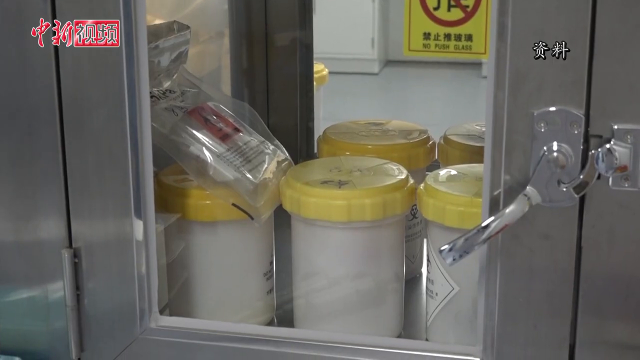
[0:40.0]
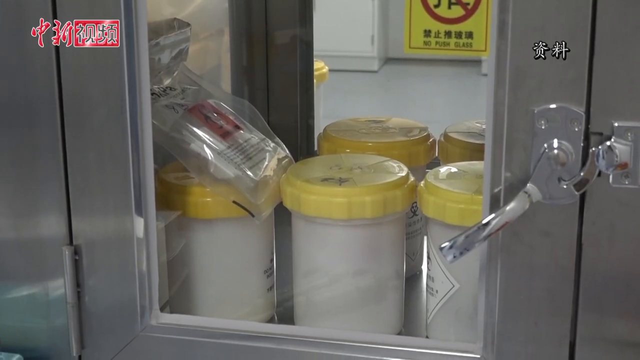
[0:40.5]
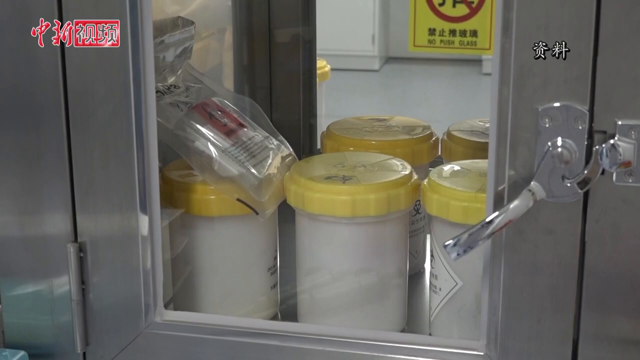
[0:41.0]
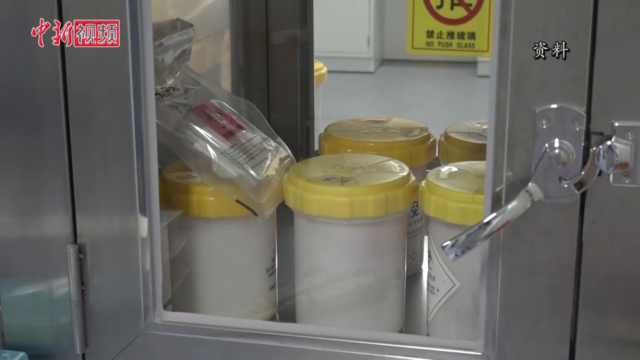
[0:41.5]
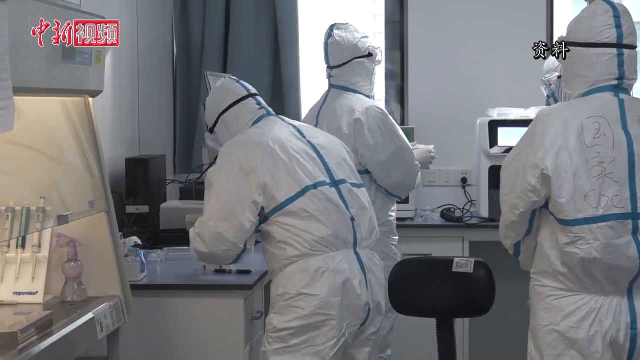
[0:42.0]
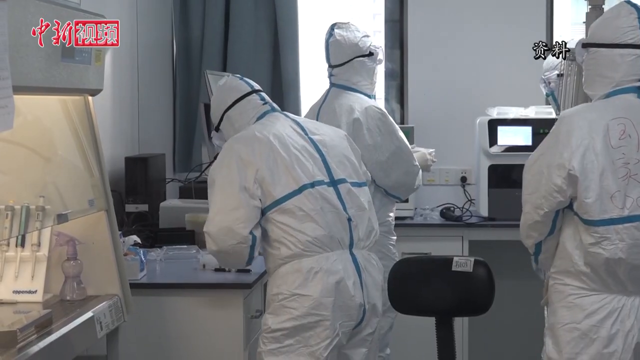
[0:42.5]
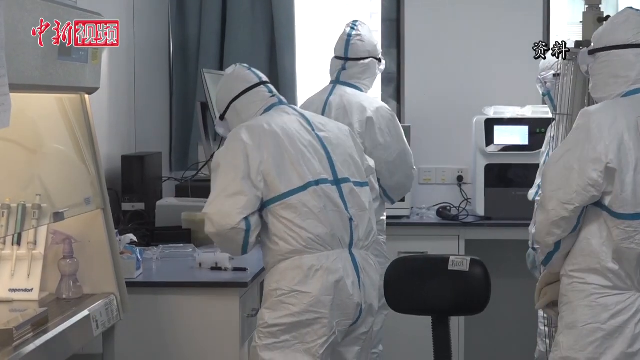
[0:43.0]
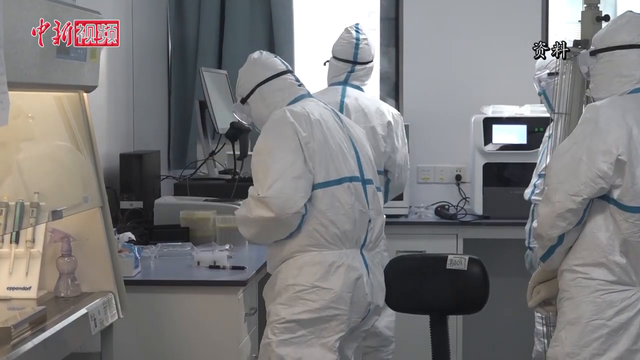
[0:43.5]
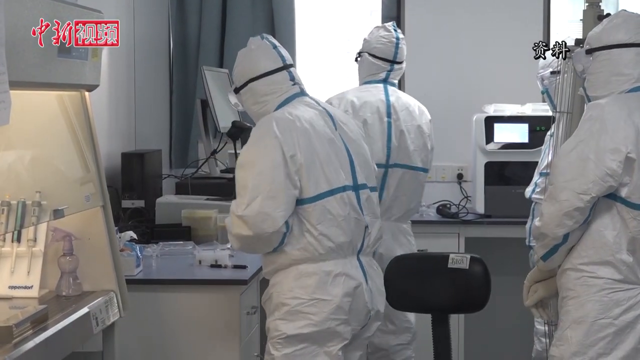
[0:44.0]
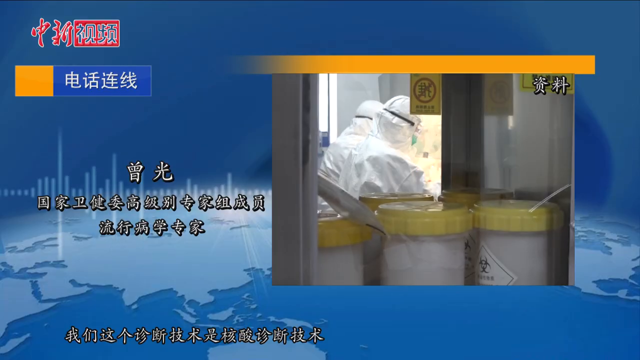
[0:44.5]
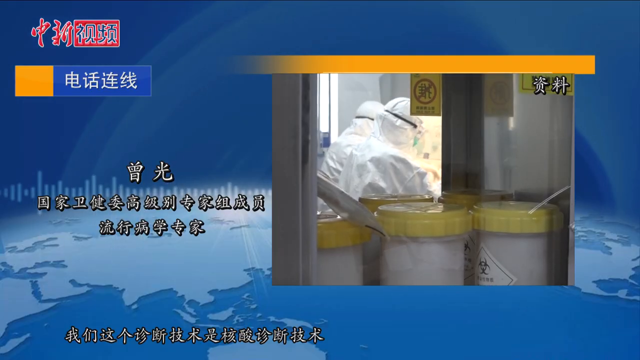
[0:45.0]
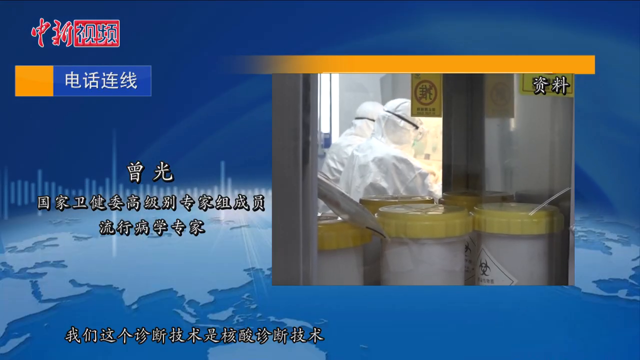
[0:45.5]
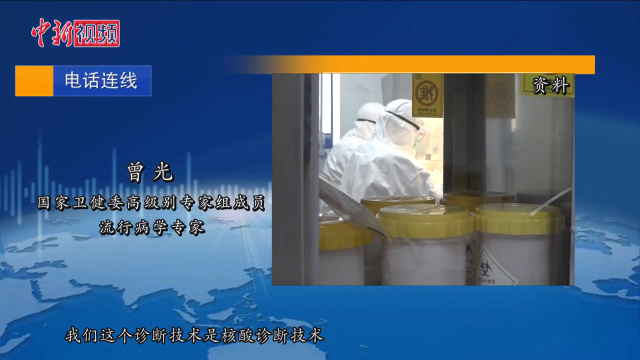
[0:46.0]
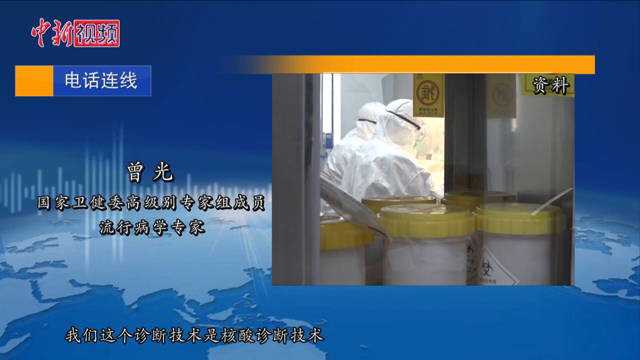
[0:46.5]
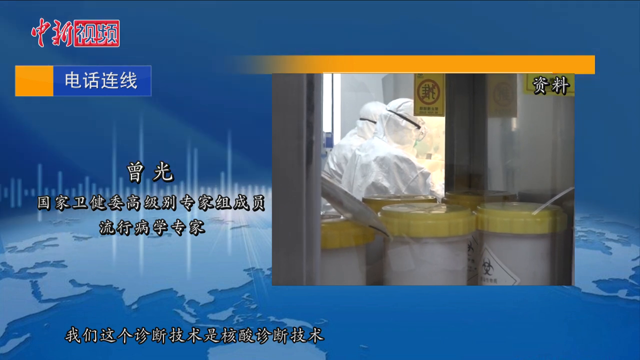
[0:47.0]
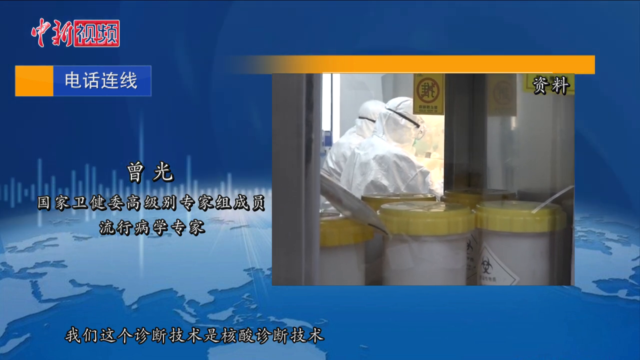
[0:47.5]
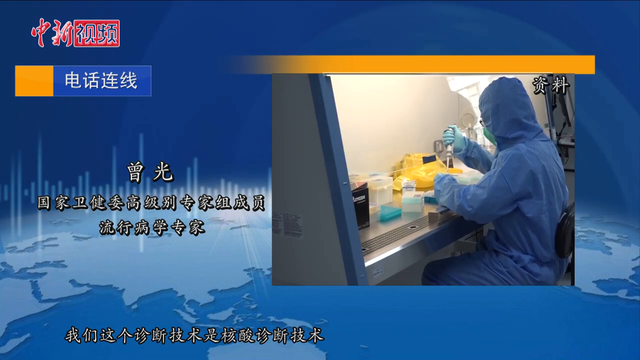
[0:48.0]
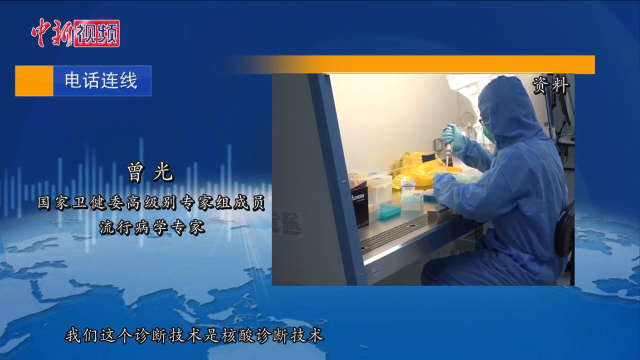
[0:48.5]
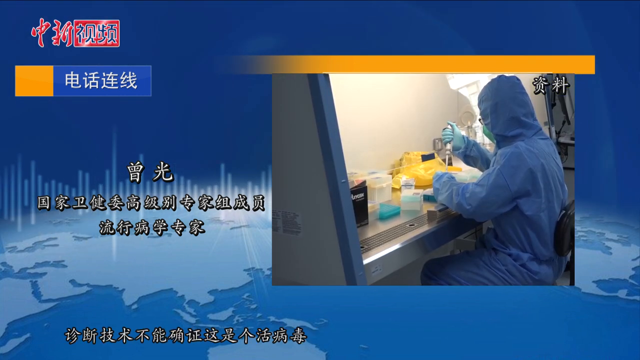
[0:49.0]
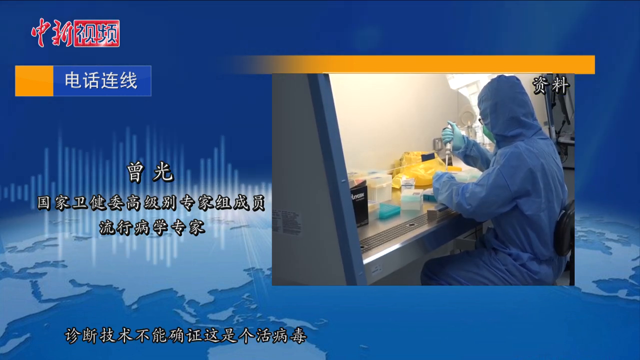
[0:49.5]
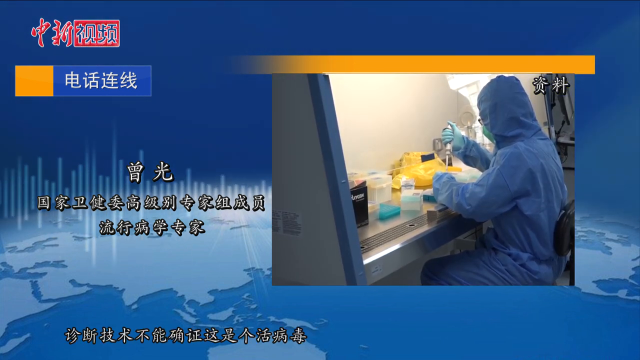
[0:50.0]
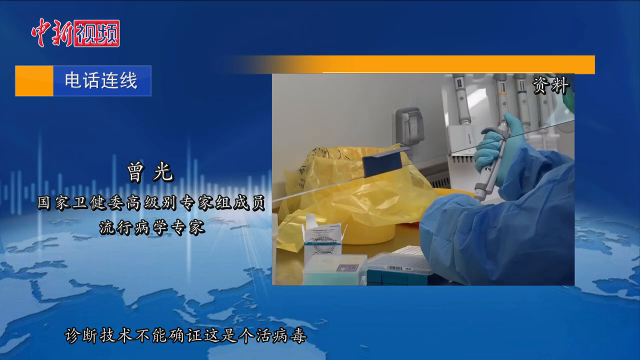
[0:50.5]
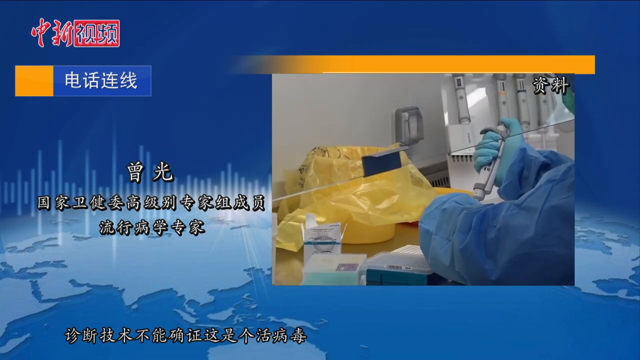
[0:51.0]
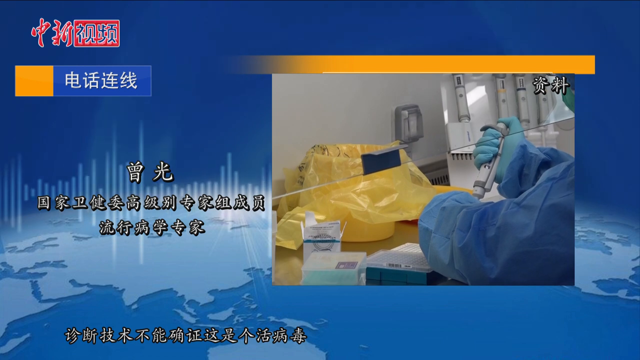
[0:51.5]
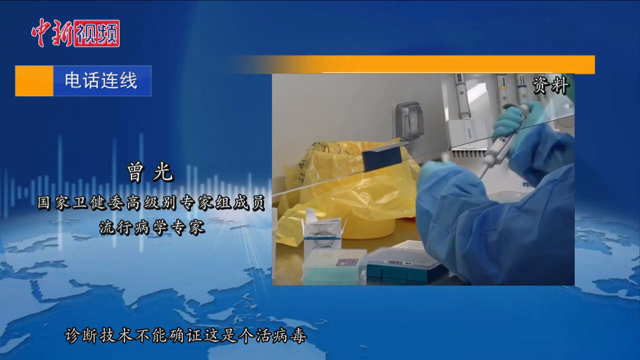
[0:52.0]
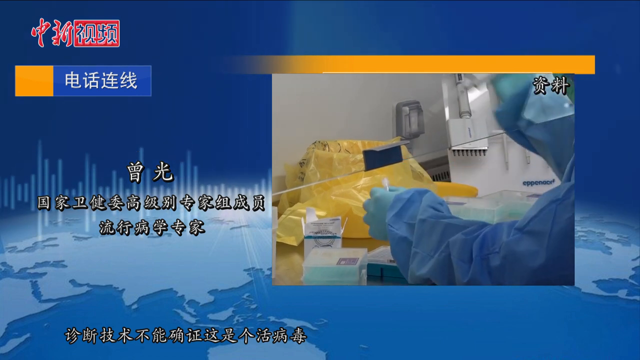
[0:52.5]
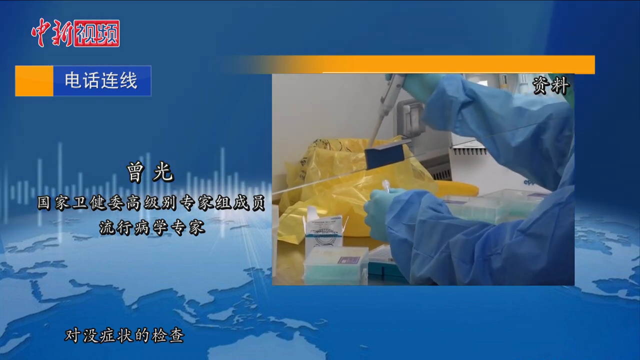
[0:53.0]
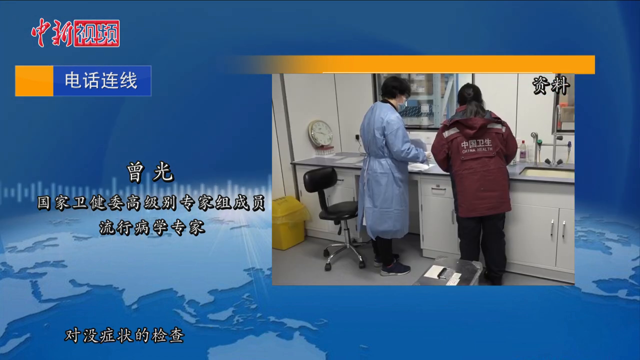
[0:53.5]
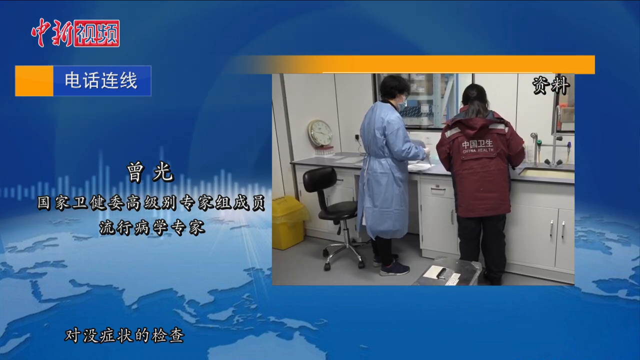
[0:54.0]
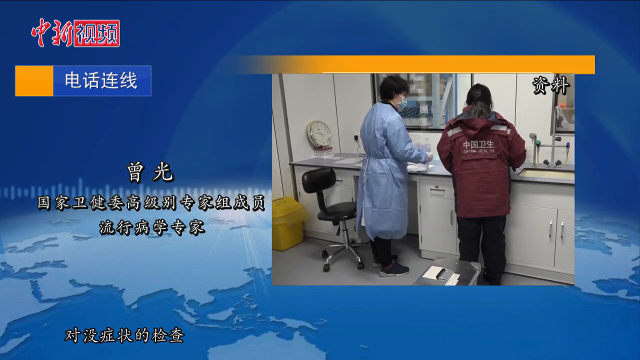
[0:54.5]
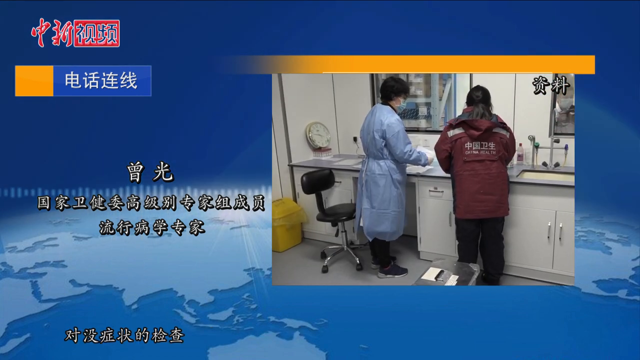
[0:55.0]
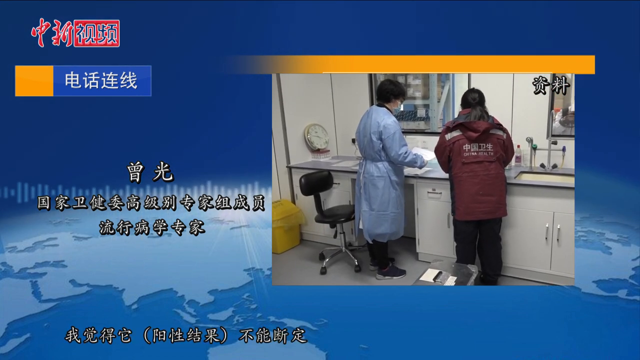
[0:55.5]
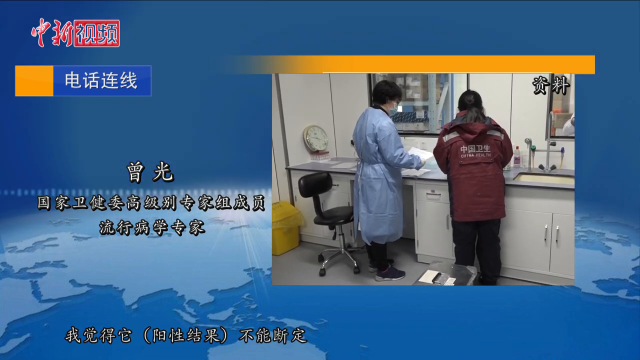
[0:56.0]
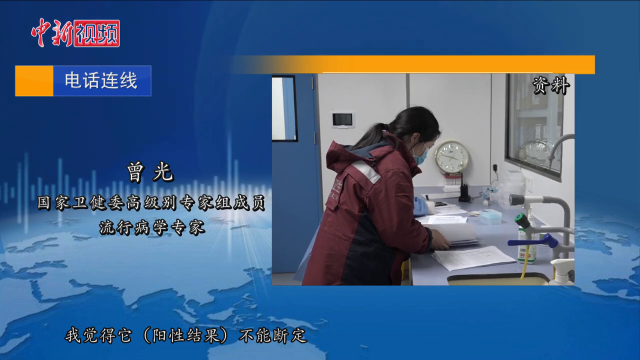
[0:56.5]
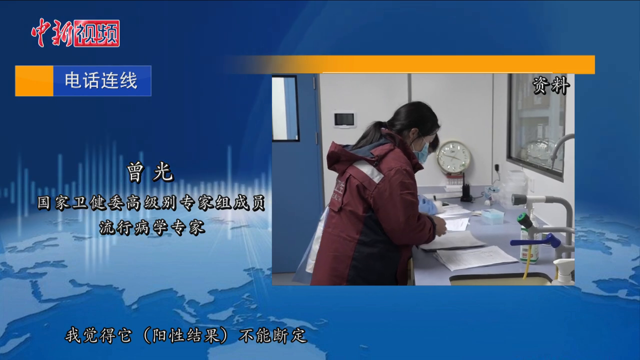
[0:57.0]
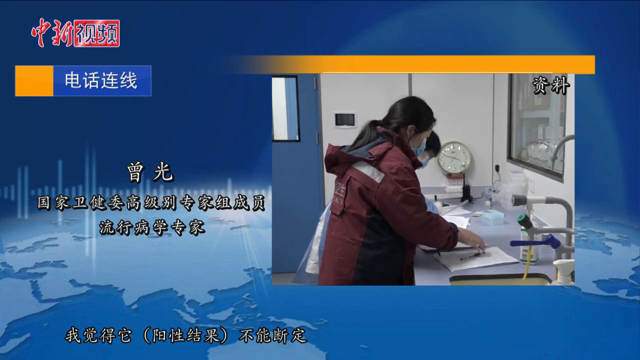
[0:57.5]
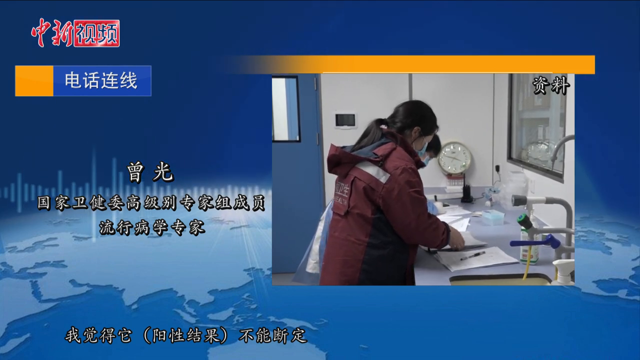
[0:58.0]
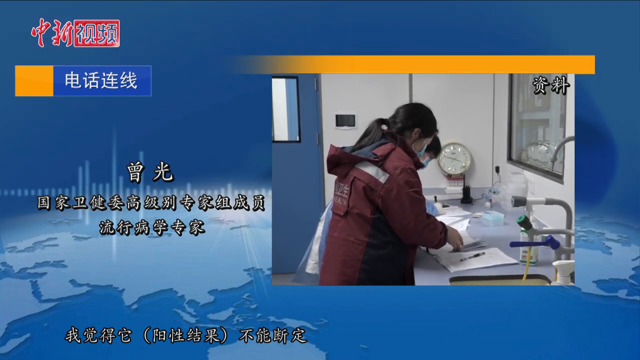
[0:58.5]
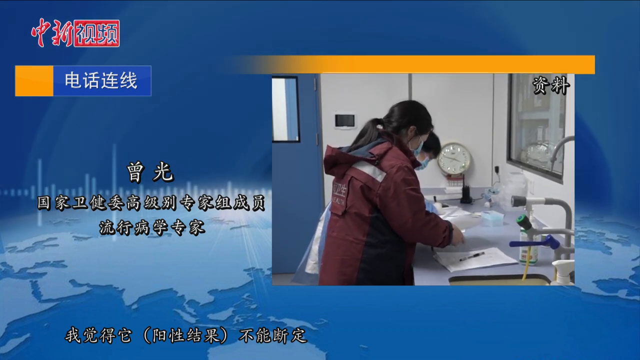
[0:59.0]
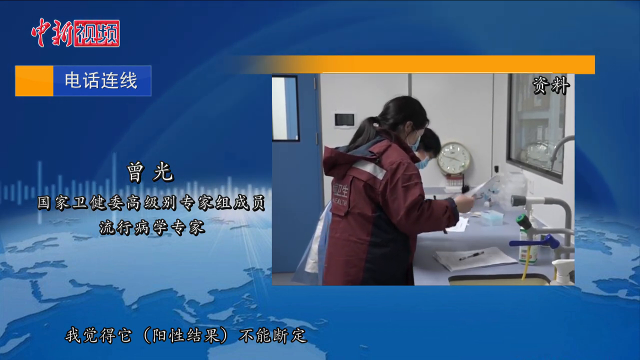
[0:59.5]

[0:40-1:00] Five containers sit still inside a heavy-duty stainless steel case with a big swinging handle to lock, open or close it. The case has a window through which the jars are visible. The body of each jar appears to be white and the lid is yellow. The video then shows more men in hazmat suits working in the laboratory. Someone in a blue hazmat suit sits at a table with a syringe, squirting different things into vials. A couple of women work at a table filling out paperwork.